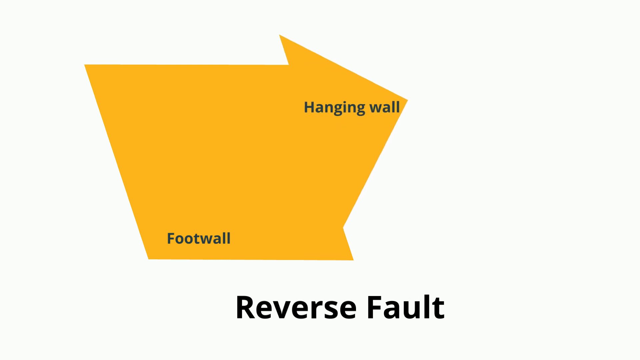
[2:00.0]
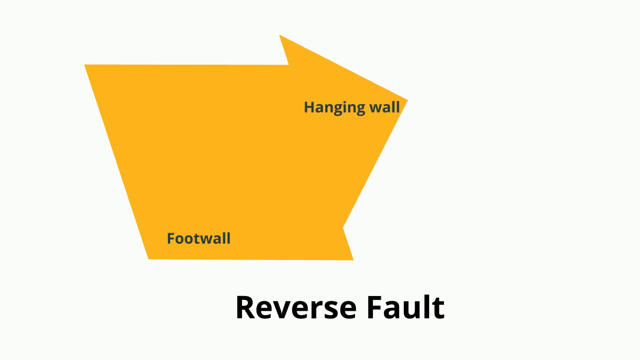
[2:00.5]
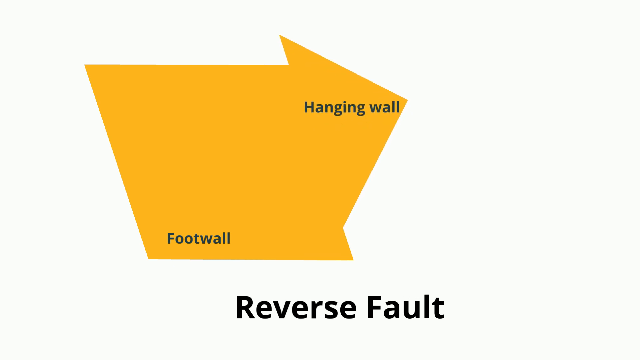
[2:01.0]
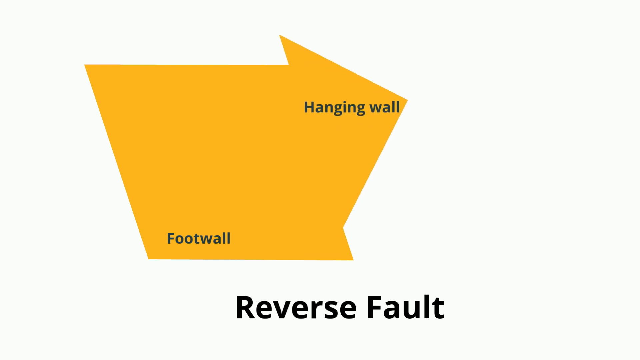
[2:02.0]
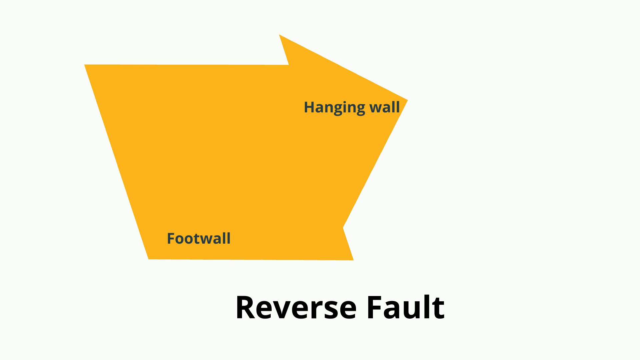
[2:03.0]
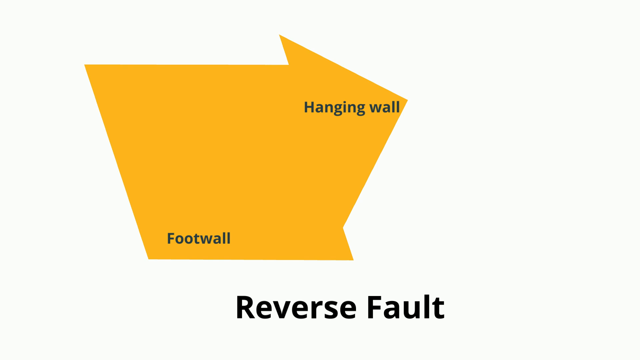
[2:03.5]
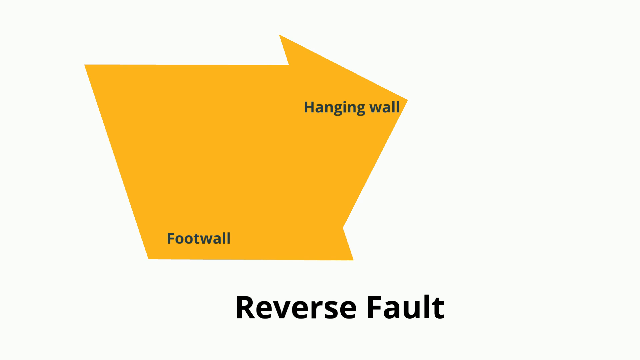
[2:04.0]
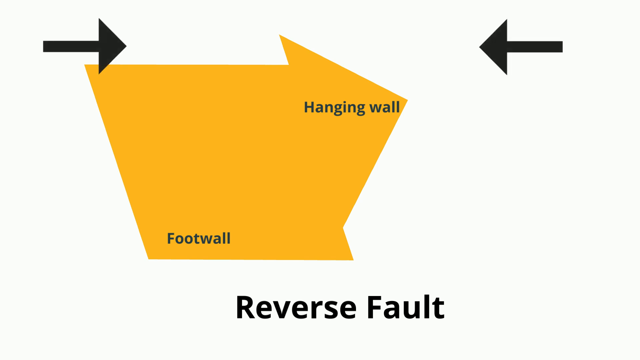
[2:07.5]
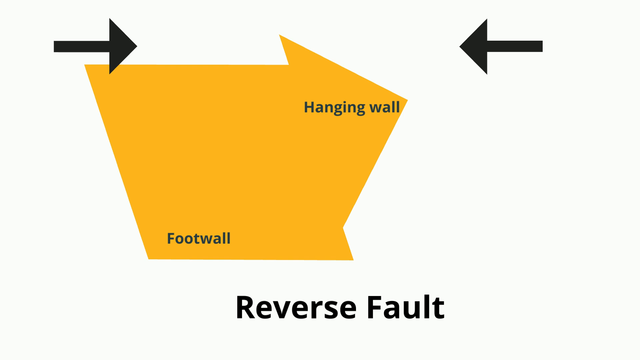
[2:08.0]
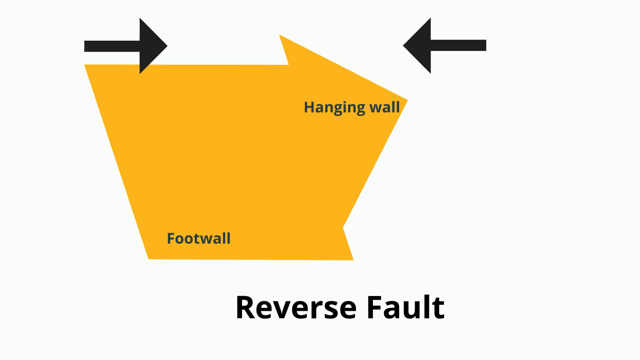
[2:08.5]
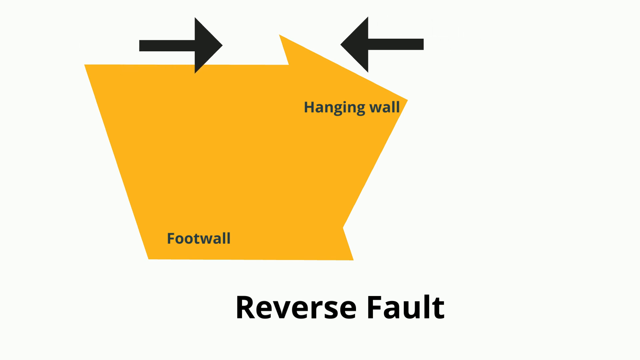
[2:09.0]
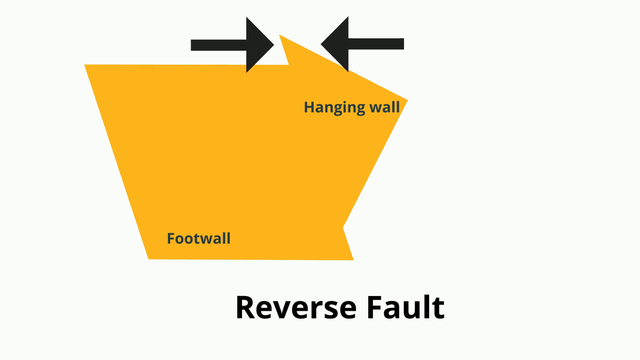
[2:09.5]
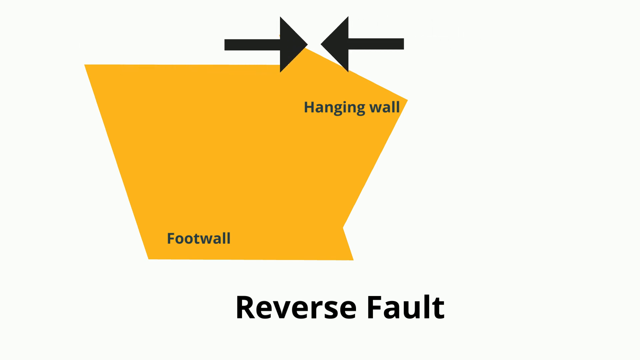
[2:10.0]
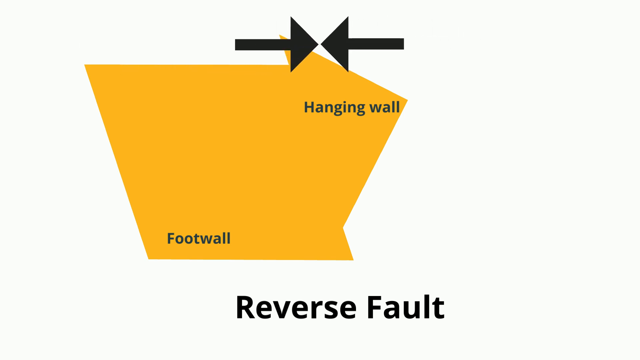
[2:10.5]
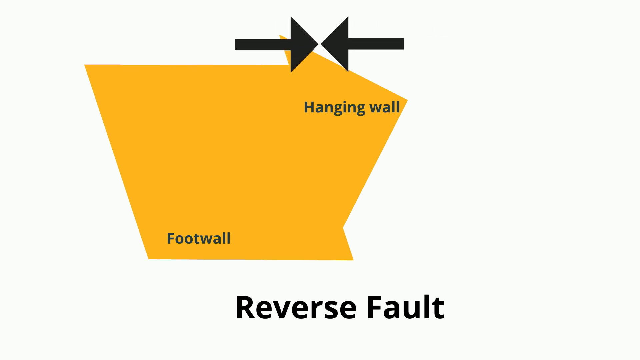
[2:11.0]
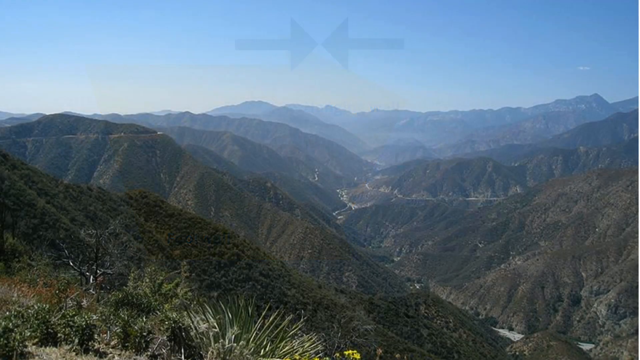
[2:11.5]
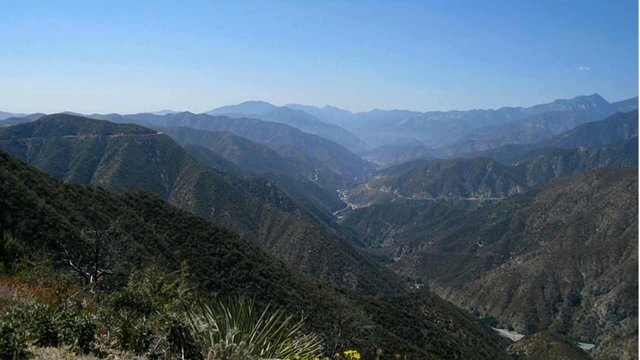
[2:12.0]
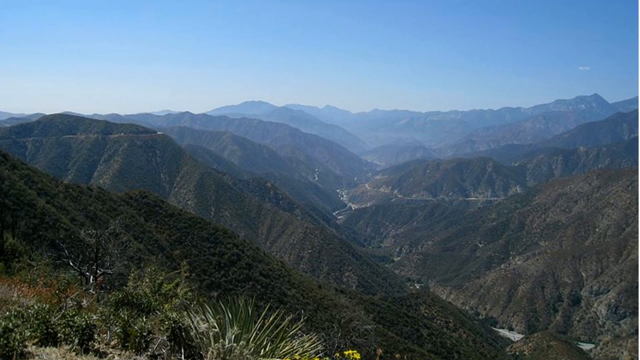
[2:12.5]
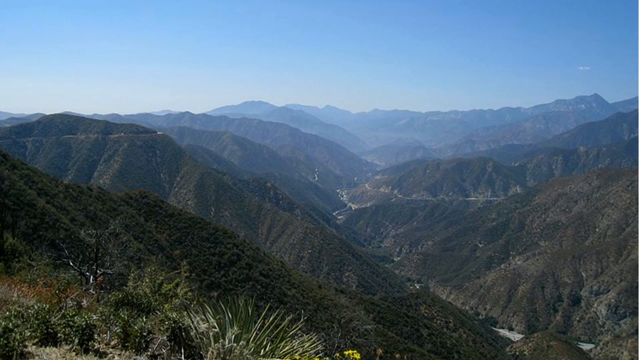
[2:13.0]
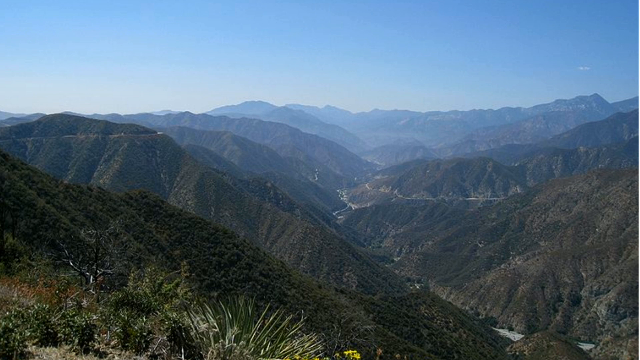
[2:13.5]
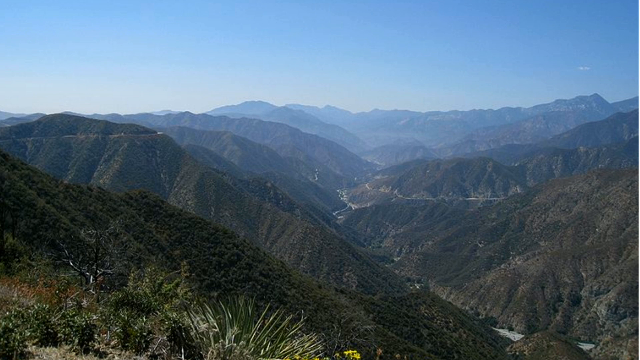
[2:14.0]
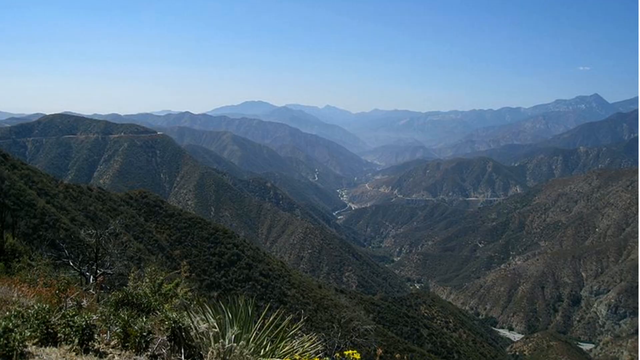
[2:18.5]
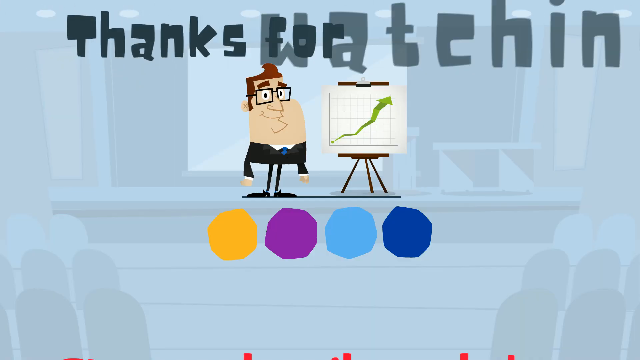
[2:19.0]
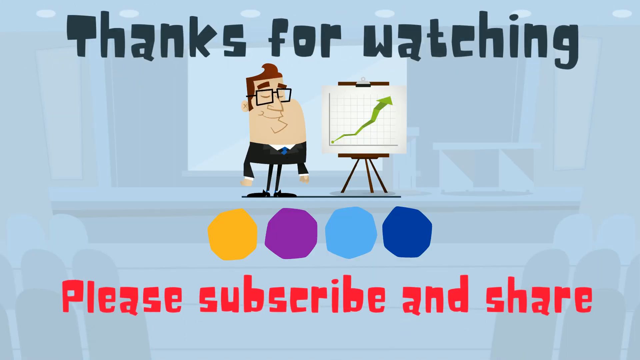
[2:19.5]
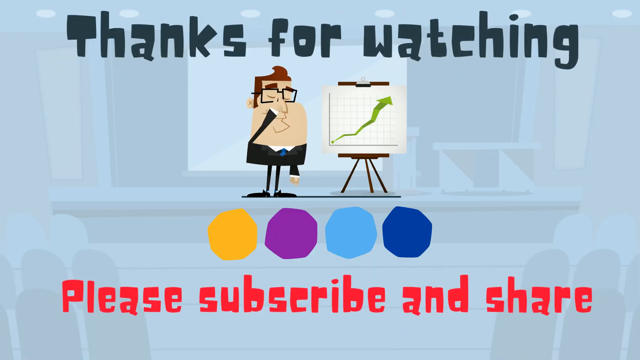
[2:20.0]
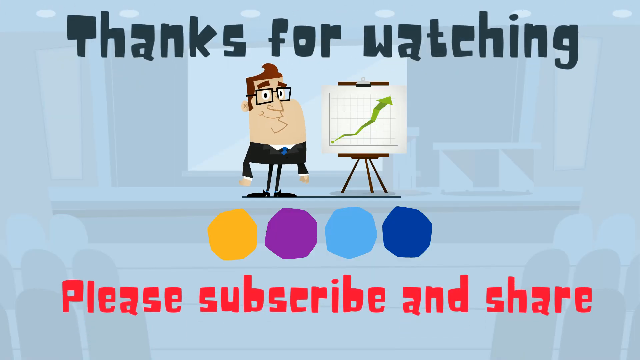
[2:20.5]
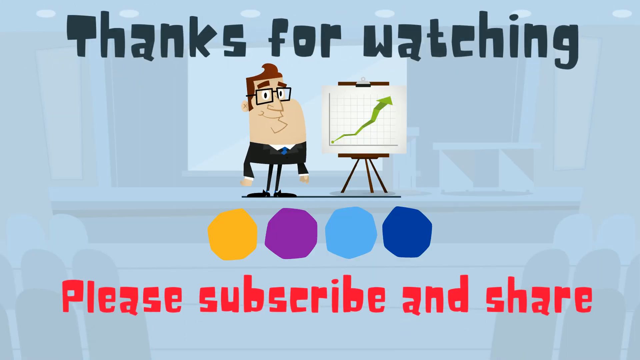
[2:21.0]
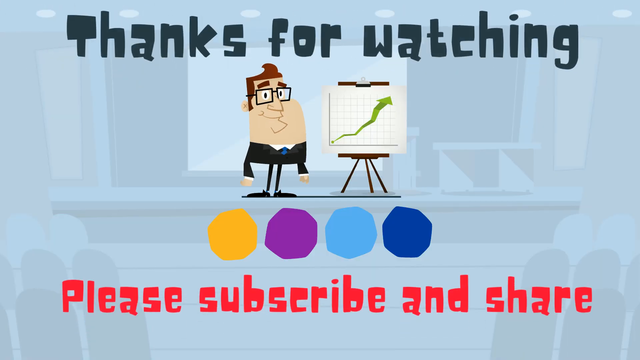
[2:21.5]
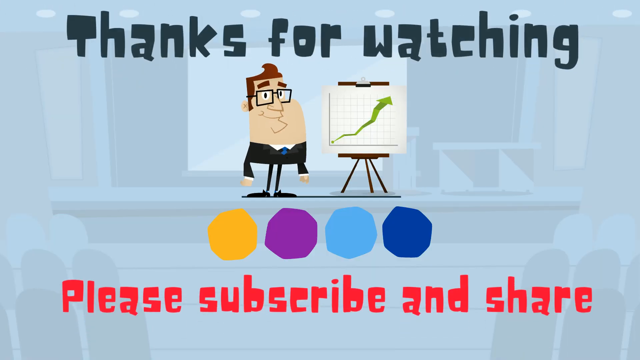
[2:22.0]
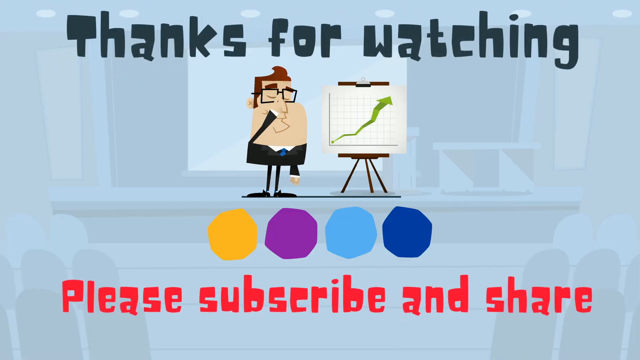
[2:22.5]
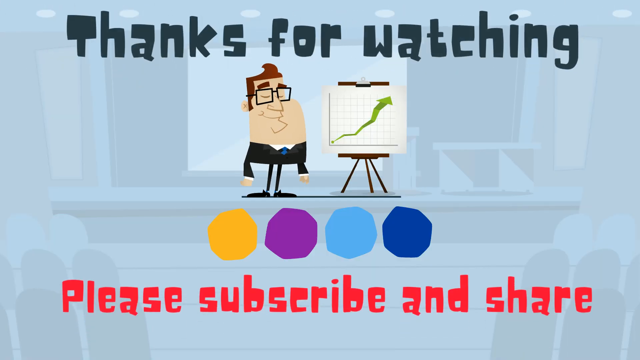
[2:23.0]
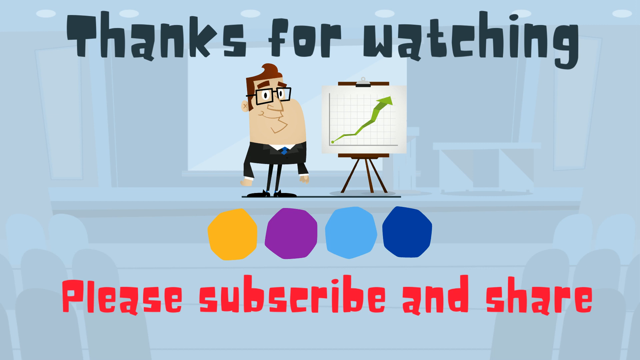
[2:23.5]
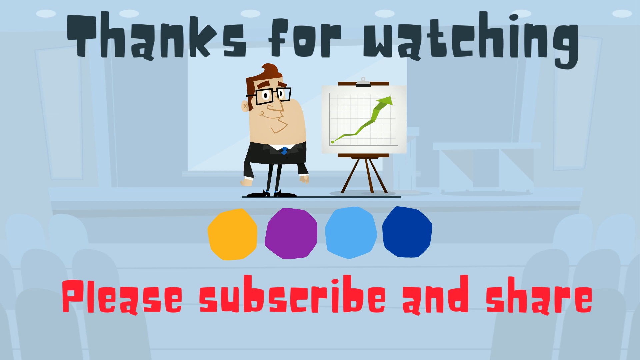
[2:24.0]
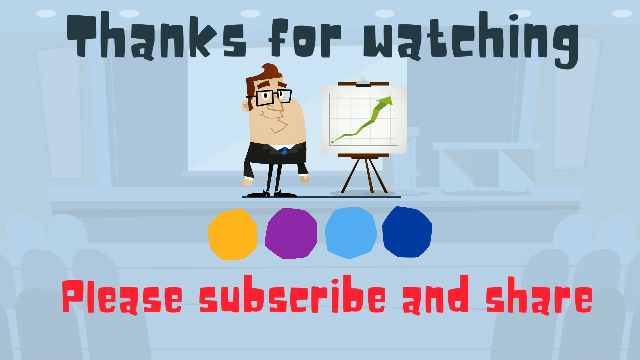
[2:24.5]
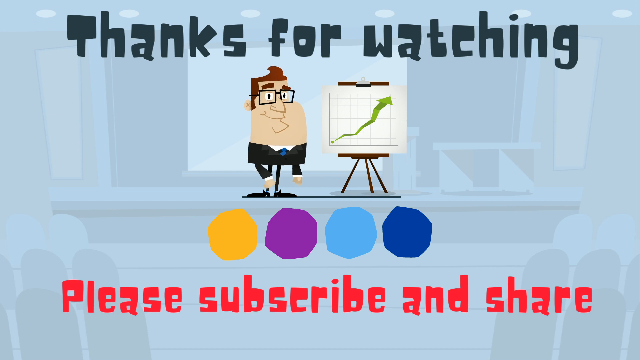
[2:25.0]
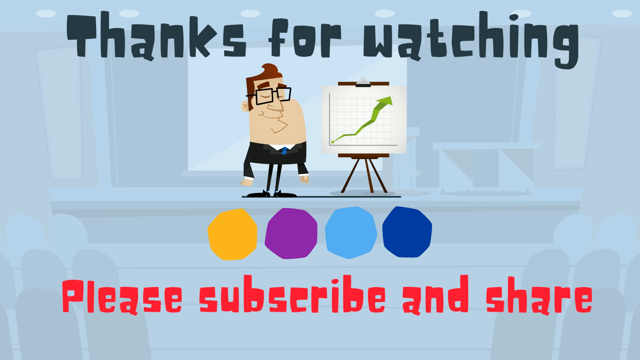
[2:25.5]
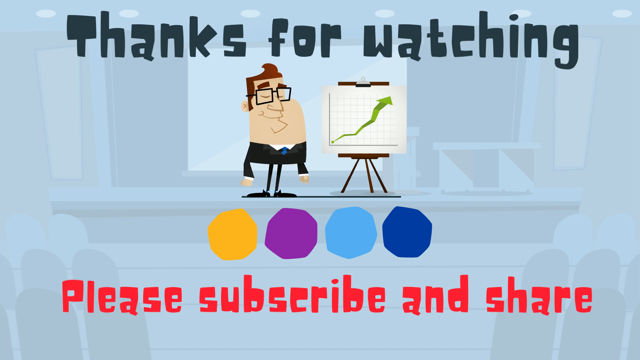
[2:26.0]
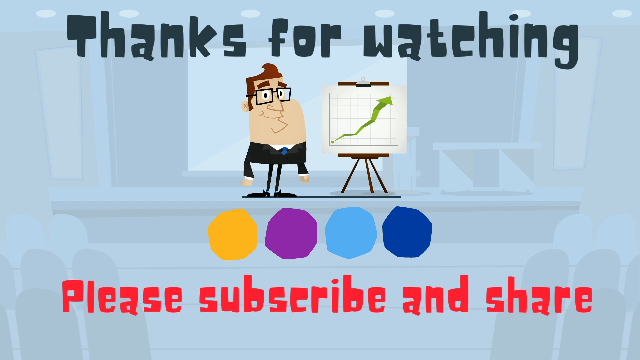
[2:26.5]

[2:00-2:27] A planet appears against a black background, then seems to have gold lines that separate the continents, with the African continent shown the most. Next, a young white man in his 20s in an office setting breaks a pencil. Different rocks and their faults follow, then diagrams of the types of faults: the normal fault, the reverse fault, and the strike-slip fault, with a few examples. The San Andreas fault is given as an example of the strike-slip fault, and numerous mountains together as an example of the reverse fault. At the end, a cartoon illustration thanks the viewer for watching and encourages them to subscribe and share the video.